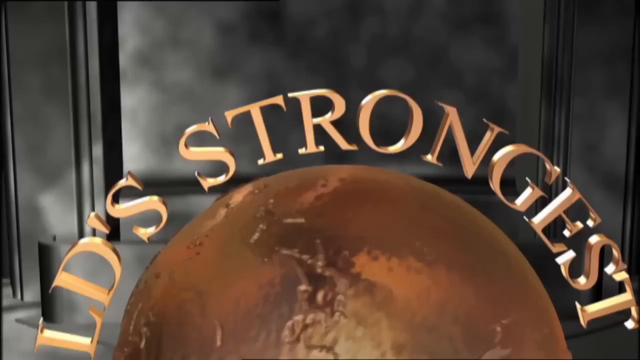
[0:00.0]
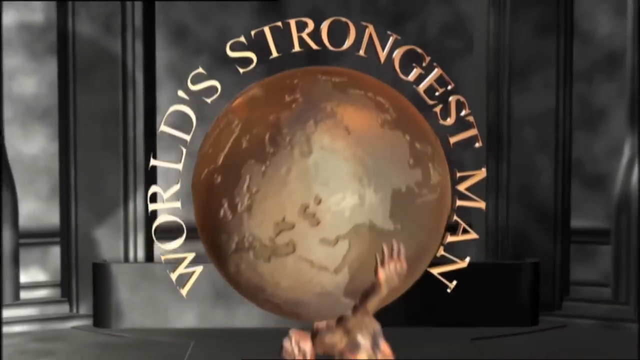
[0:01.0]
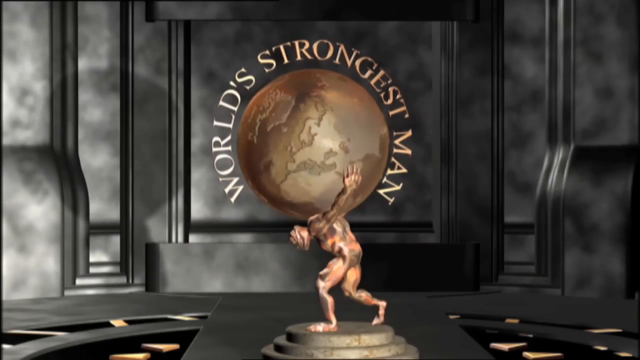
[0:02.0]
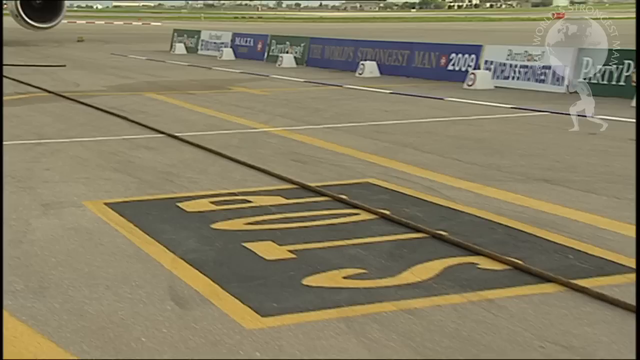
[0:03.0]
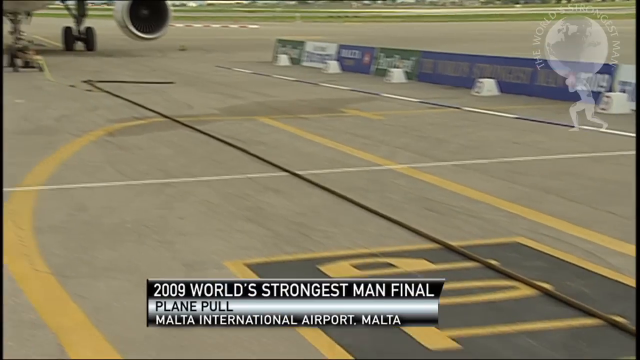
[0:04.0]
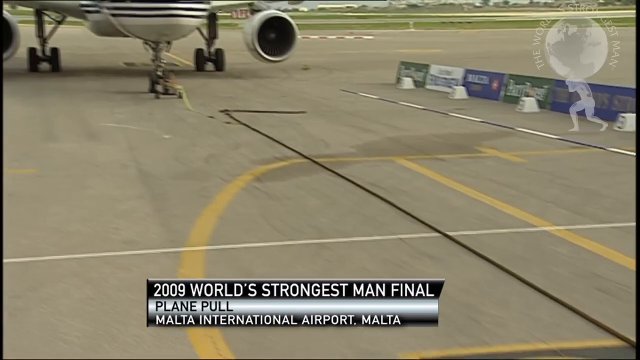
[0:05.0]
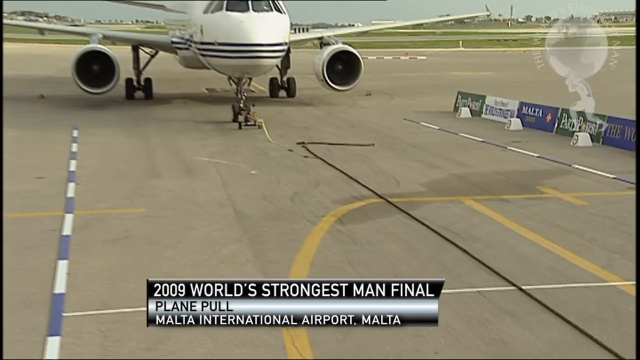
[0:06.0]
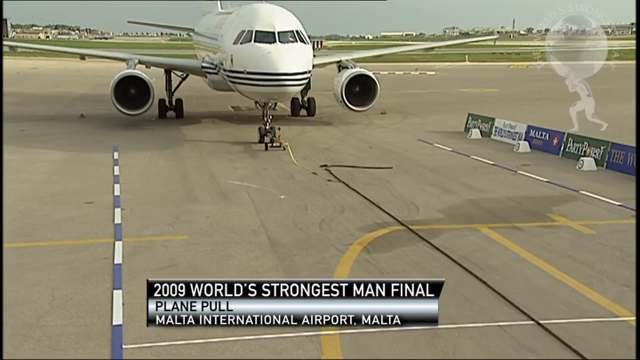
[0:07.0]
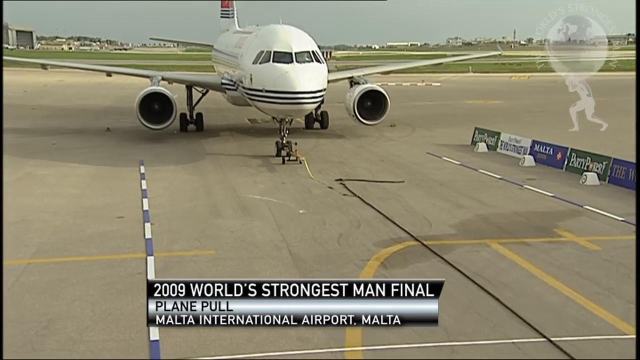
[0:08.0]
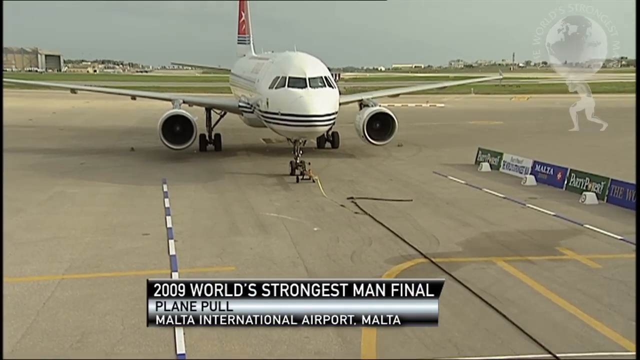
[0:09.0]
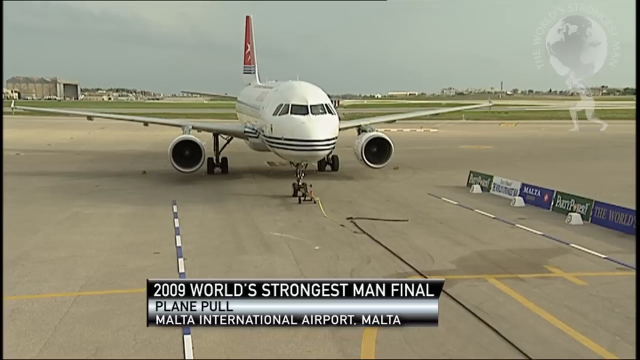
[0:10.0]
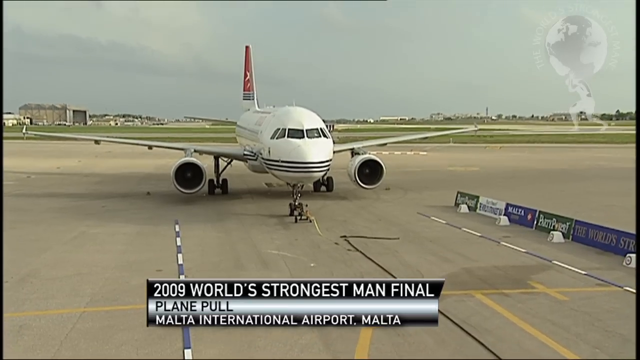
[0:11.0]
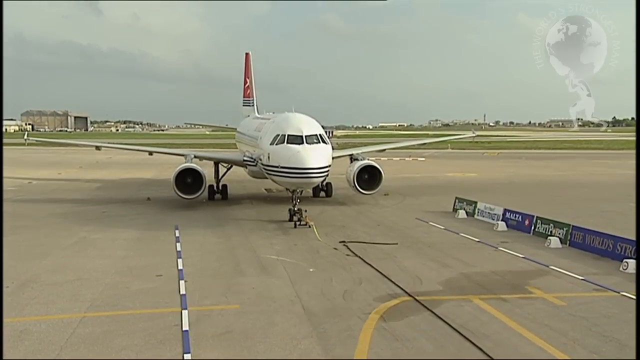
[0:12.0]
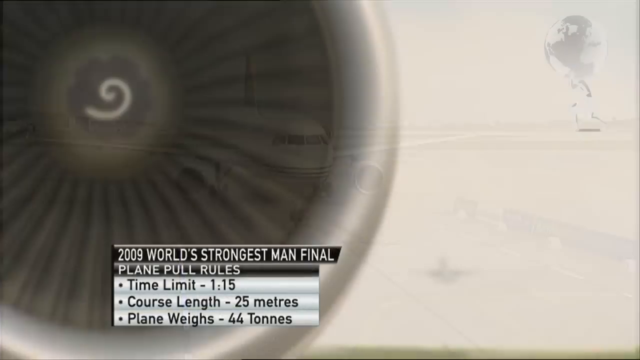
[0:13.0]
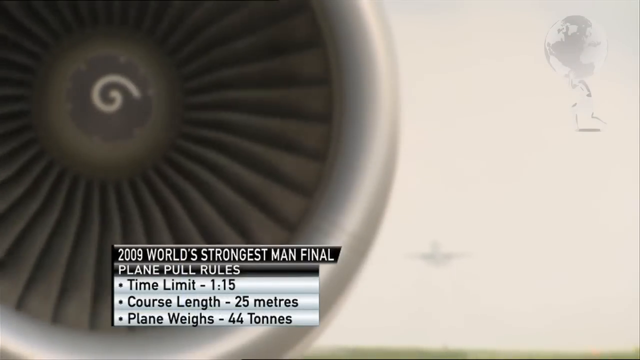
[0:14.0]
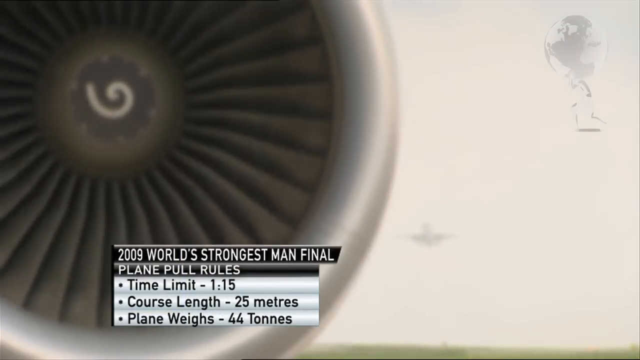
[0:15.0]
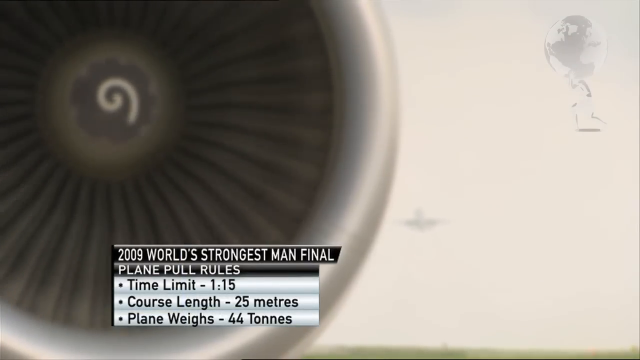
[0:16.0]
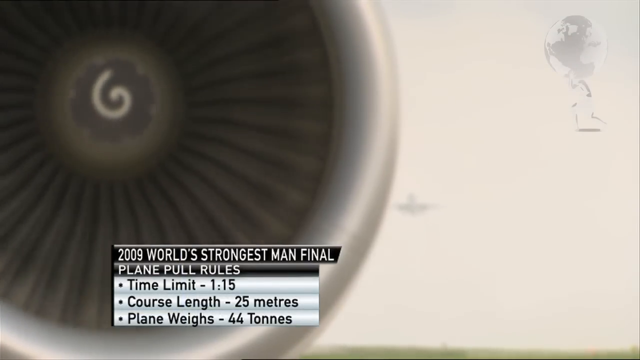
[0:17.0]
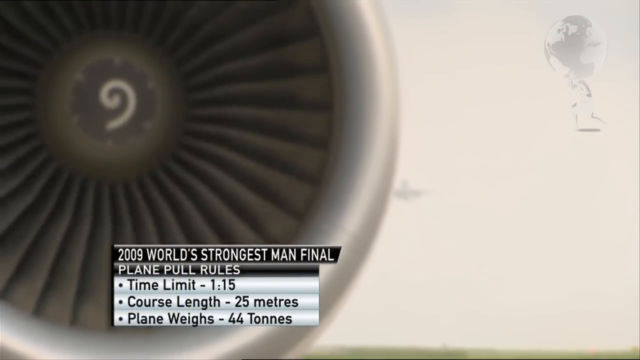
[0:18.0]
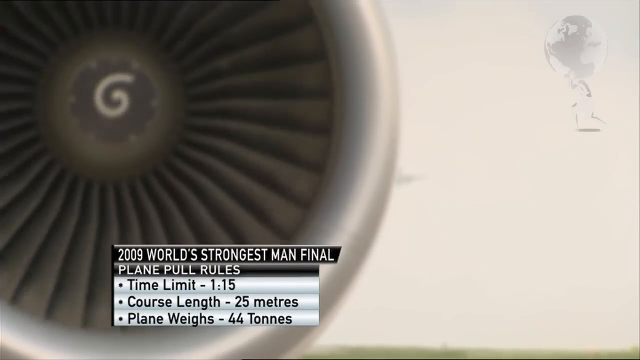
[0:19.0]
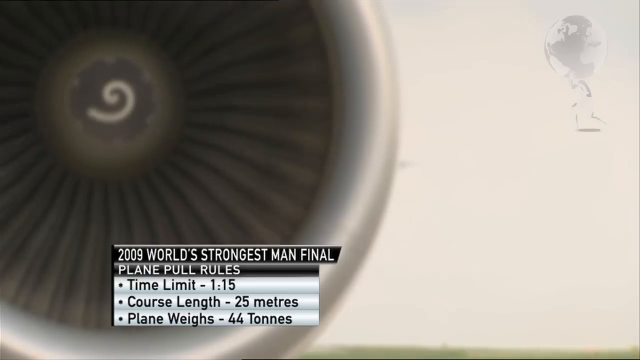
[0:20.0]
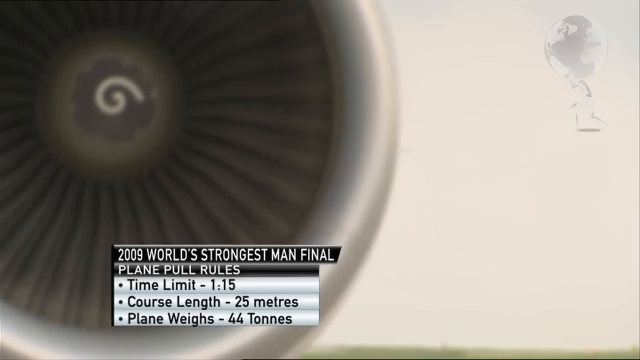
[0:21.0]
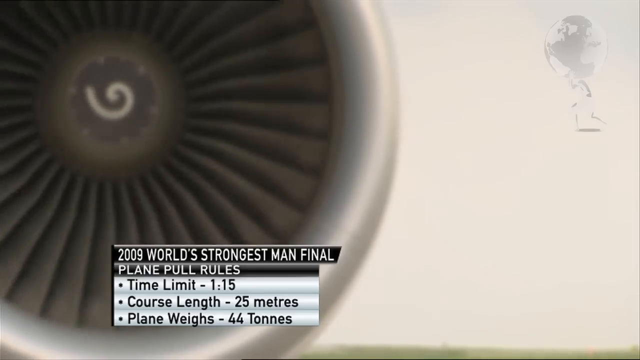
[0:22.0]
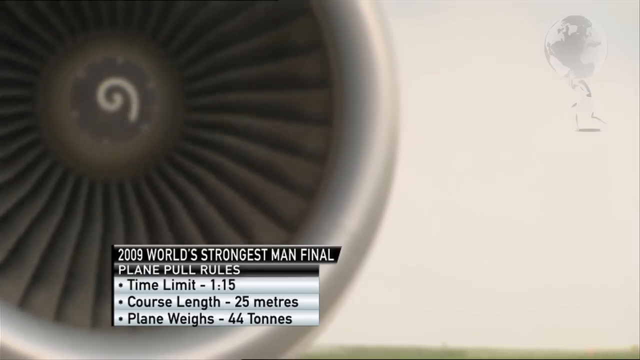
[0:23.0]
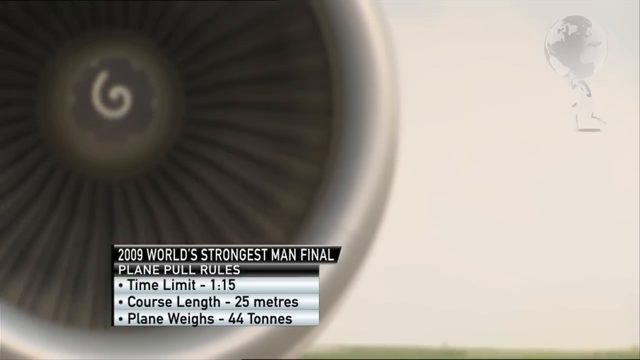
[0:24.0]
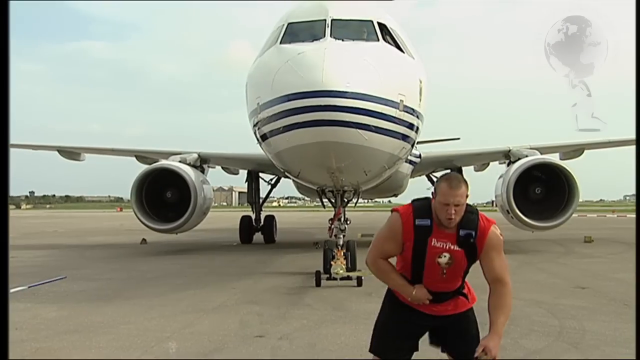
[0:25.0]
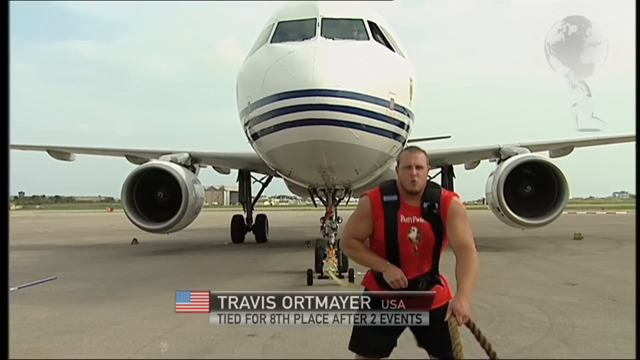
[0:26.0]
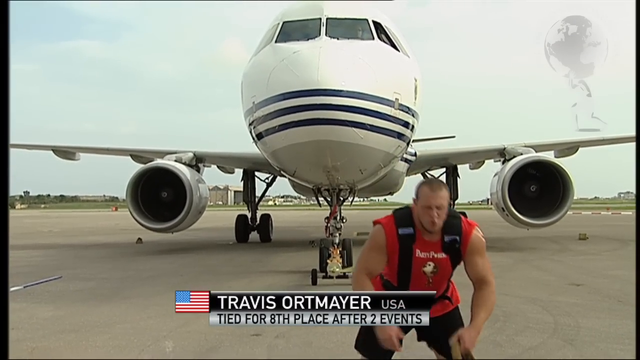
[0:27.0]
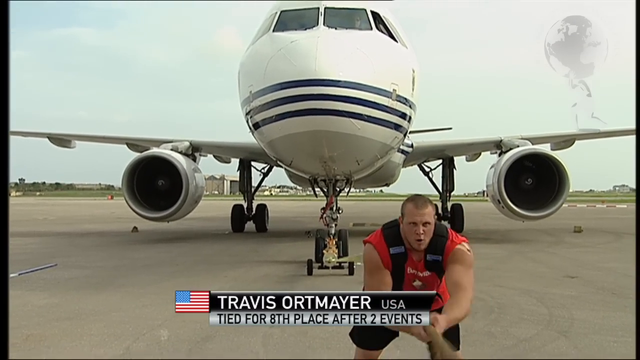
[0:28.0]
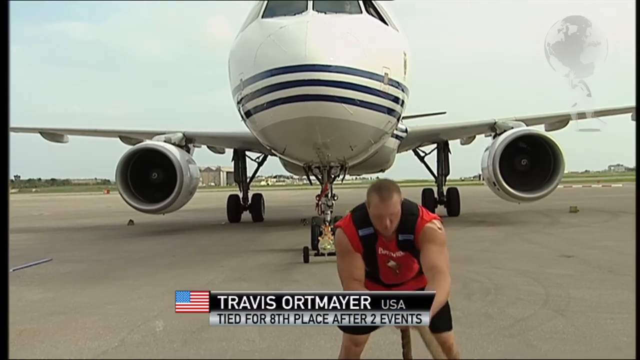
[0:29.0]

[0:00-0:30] A logo for the World's Strongest Man competition appears in the center of the screen: a bronze statue of a muscular man lifting a bronzed depiction of the entire world over his shoulders, with a dark gray building with pillars on either side in the background. The world spins in the man's hands. The video then cuts to live-action footage of a runway where an airplane is parked, with a World's Strongest Man logo watermark in the top right corner of the screen. A caption at the bottom of the screen says this is the 2009 World's Strongest Man final, that the event is the Plane Pull, and that it takes place at Malta International Airport in Malta. A close-up shows the plane's turbine spinning, and the rules appear: a time limit of a minute and 15 seconds, a course length of 25 meters, and a plane weight of 44 tons. A strongman wears a harness with a rope tied from it to the plane. He pulls on another rope and begins to walk forward.